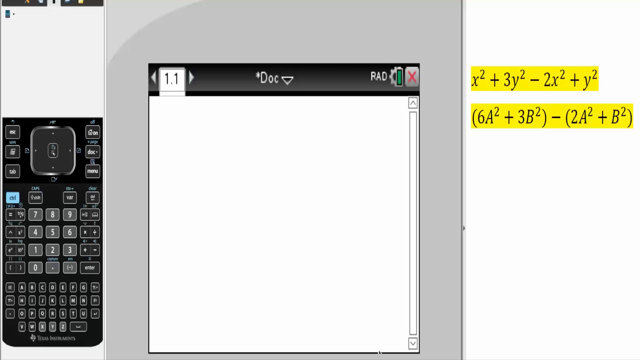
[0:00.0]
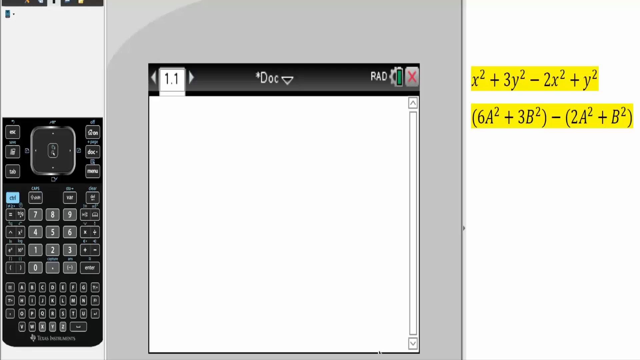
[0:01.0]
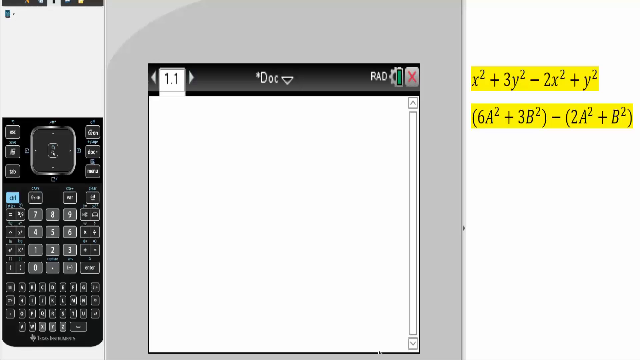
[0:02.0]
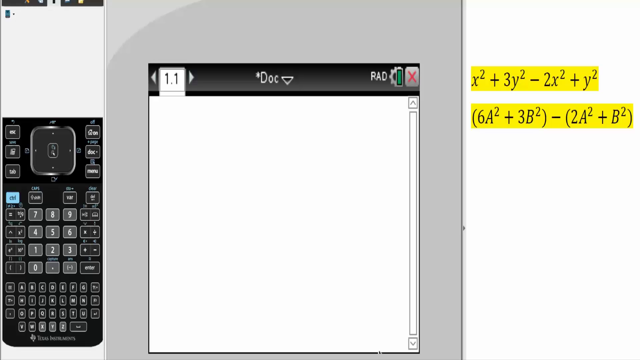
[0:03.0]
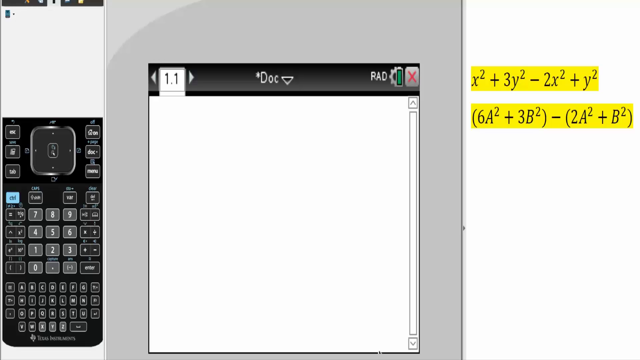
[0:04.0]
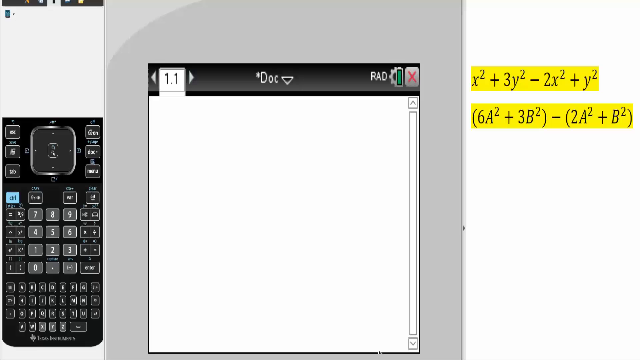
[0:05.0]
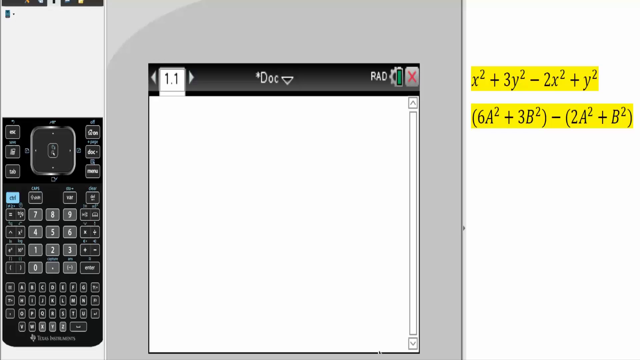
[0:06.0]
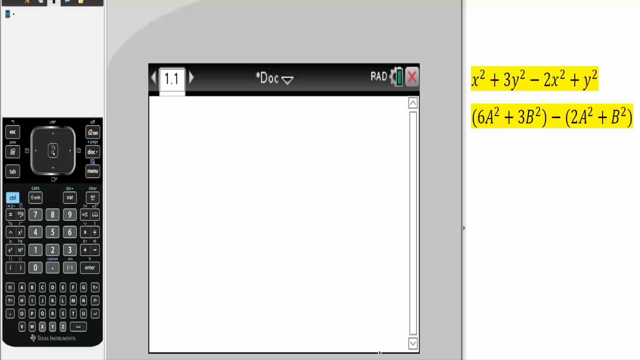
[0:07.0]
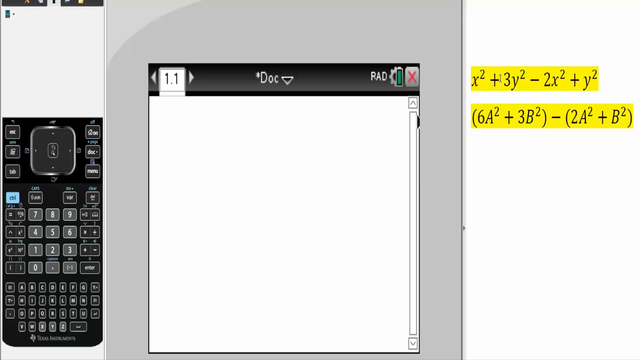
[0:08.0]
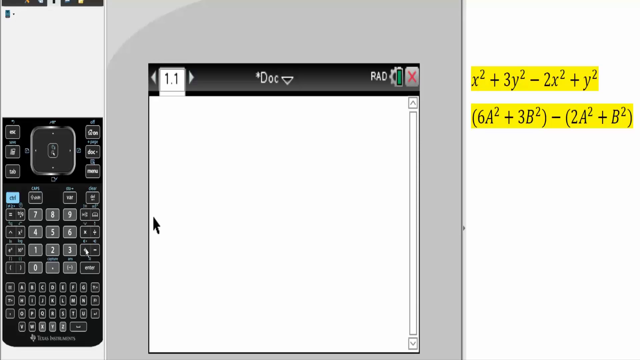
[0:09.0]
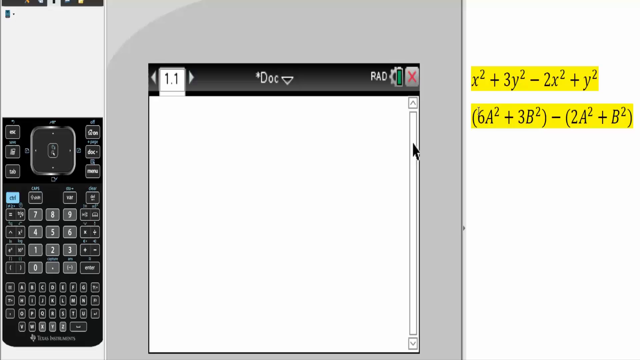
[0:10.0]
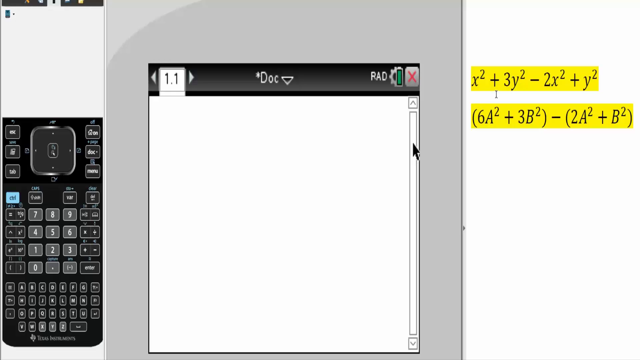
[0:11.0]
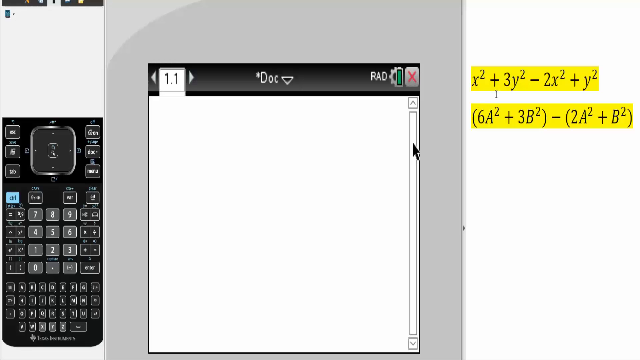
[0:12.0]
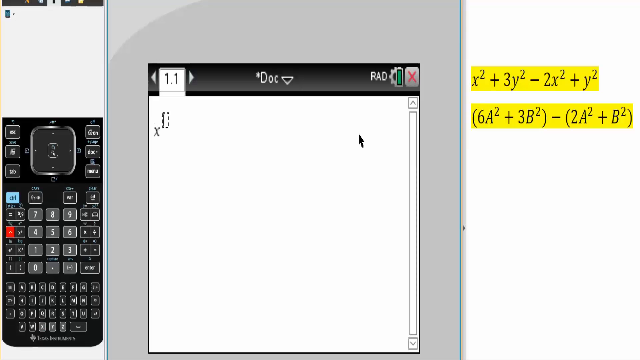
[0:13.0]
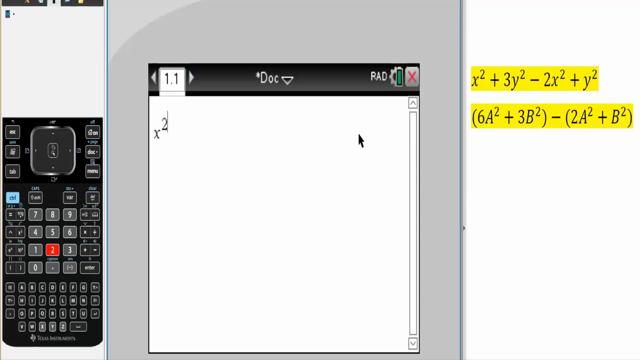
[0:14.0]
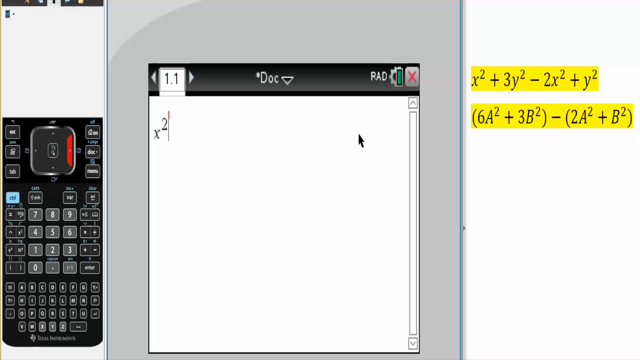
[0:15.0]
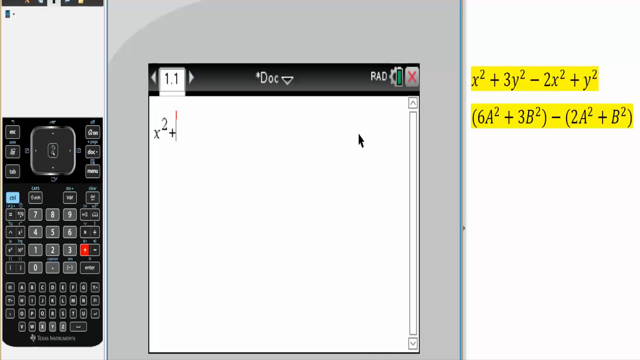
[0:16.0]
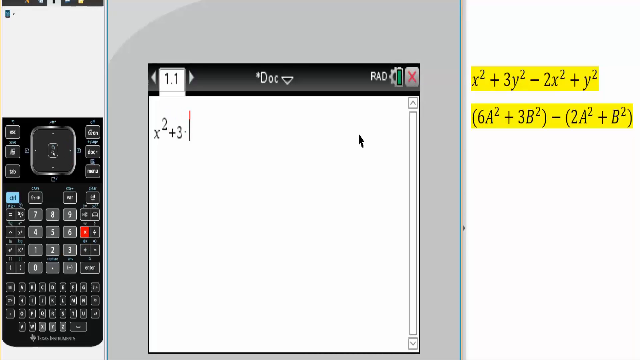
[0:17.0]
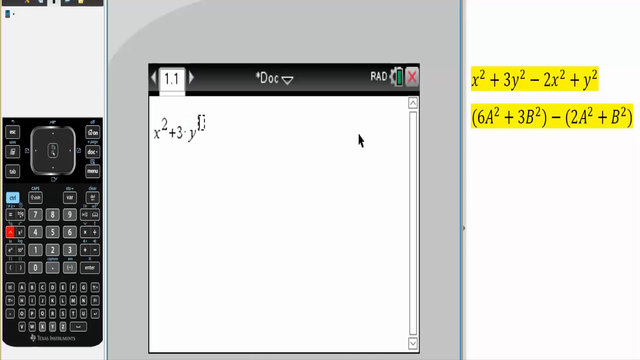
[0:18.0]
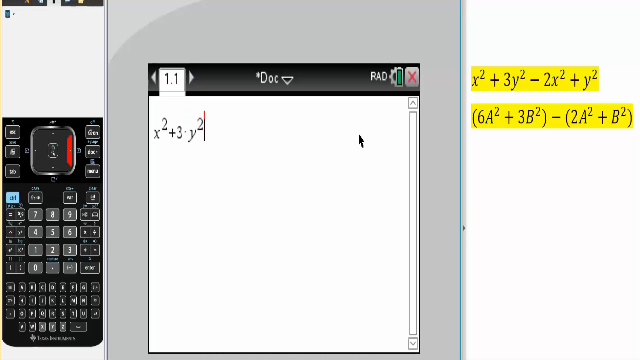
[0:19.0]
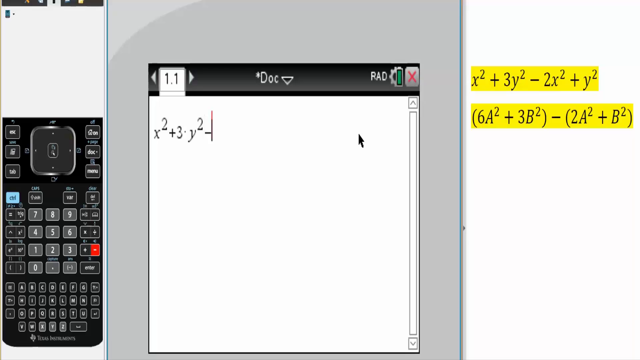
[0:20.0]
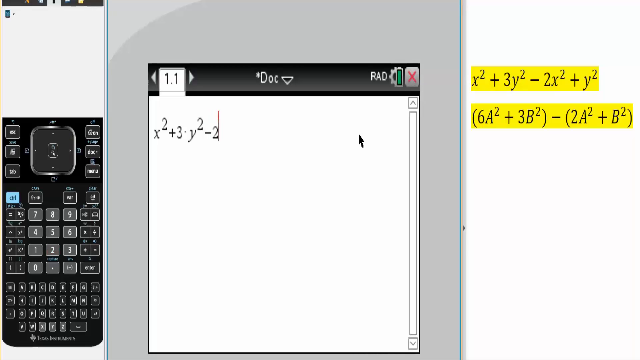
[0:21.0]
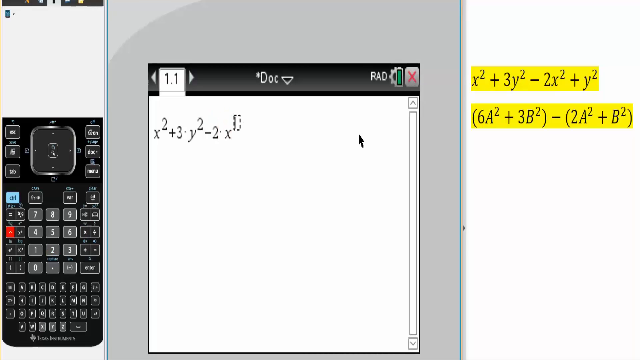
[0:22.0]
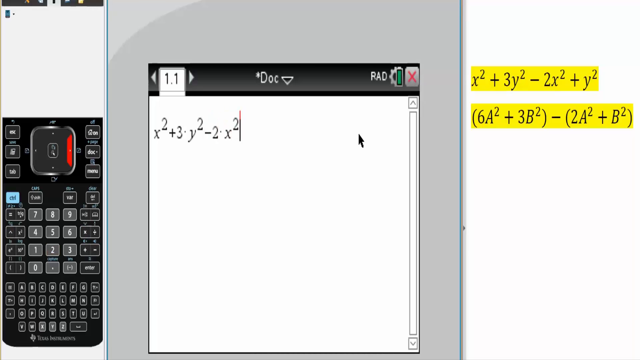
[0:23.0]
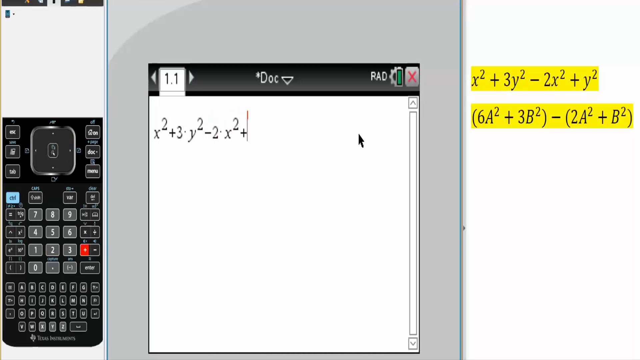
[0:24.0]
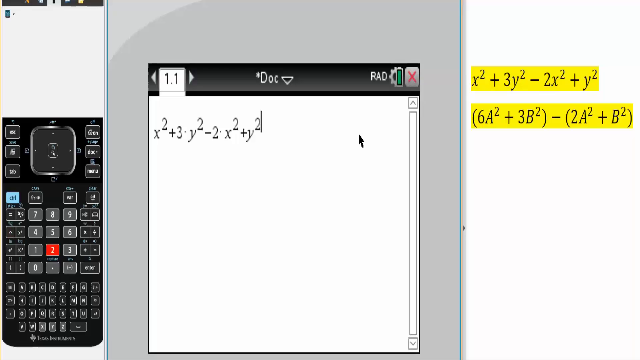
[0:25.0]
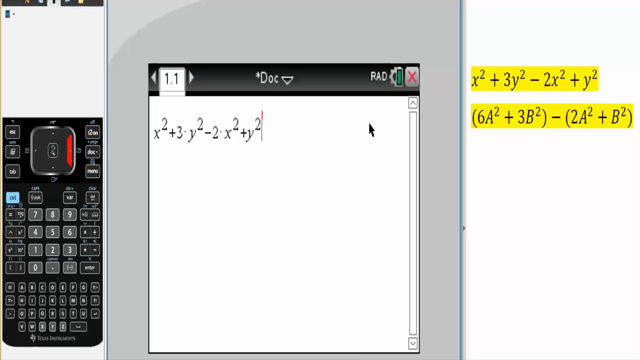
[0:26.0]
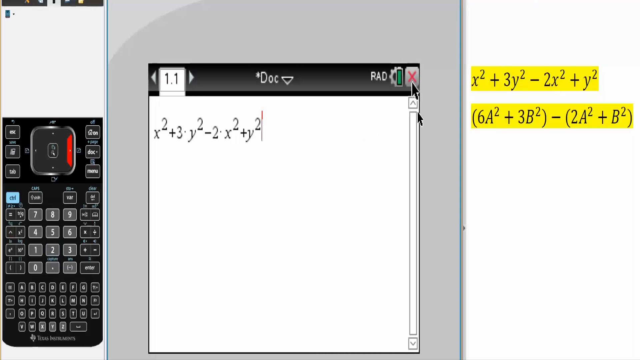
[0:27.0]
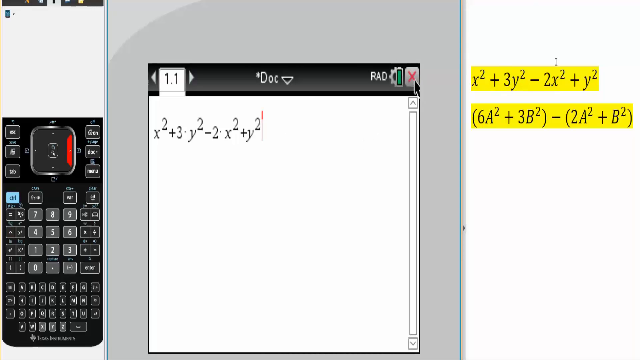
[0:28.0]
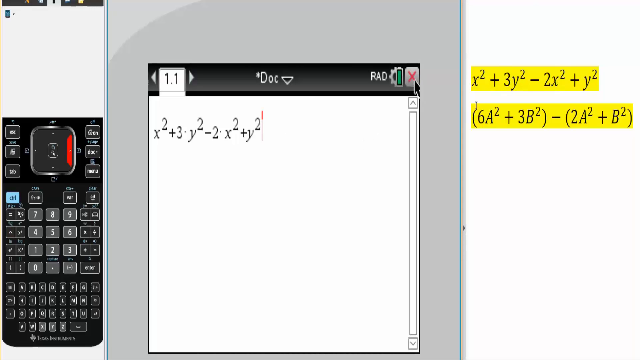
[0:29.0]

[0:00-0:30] A person whose face is not visible uses what looks like a scientific calculator. The physical calculator is visible on the left side of the frame, with a full keyboard and navigation buttons, and it looks like old smartphones such as the Blackberry; given how advanced it seems, it may possibly be an app on a smartphone. The main focus is the calculator screen, which shows an open document where the person enters what appears to be a maths formula. On the right side is another mathematical problem, possibly algebra. The user works out the answers, but the outcome of the maths problem is not shown.